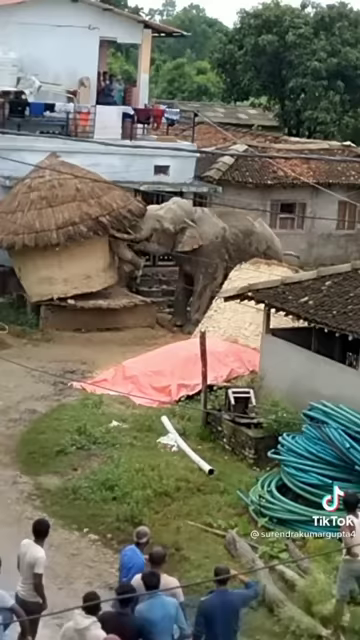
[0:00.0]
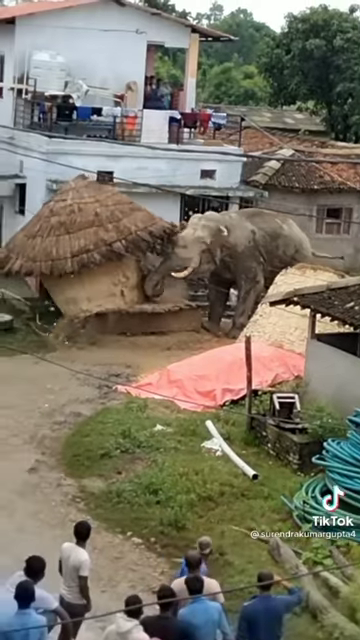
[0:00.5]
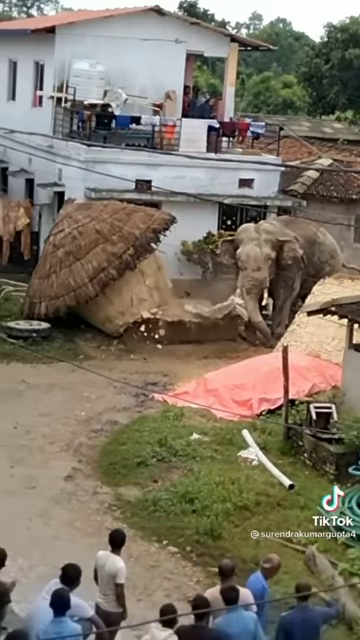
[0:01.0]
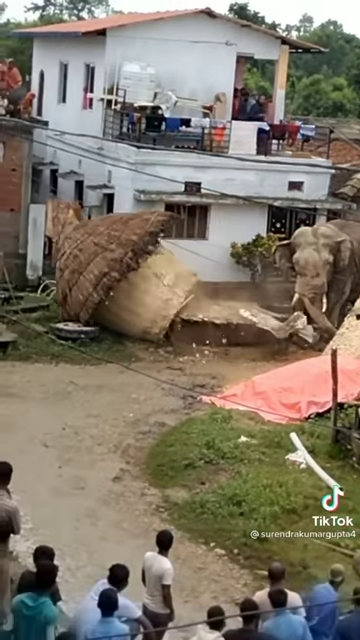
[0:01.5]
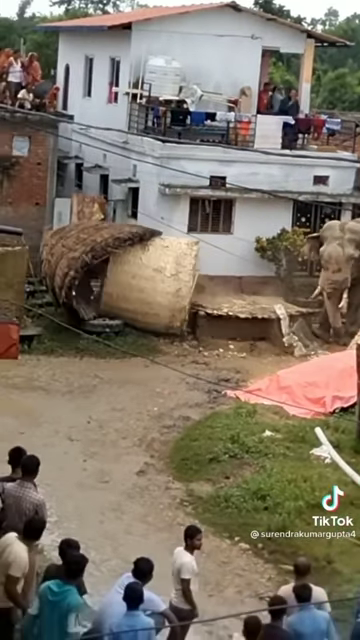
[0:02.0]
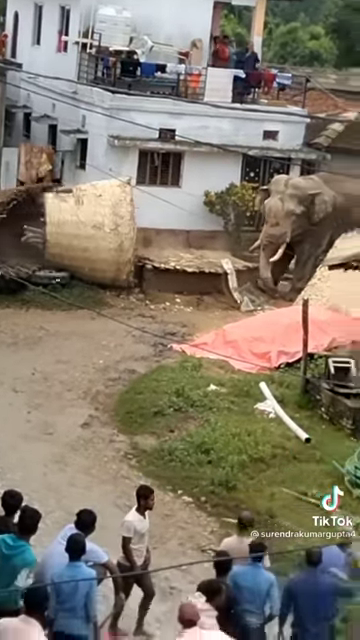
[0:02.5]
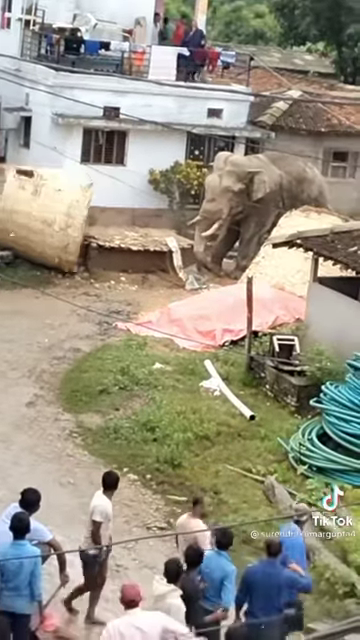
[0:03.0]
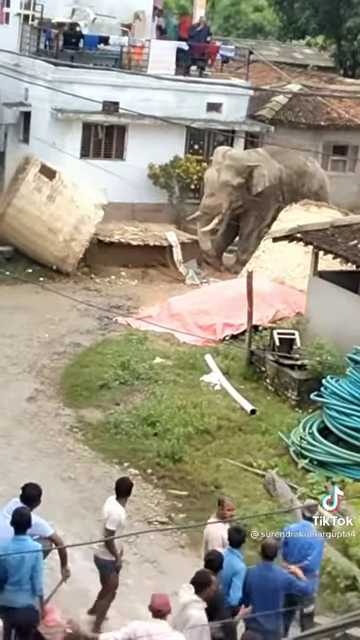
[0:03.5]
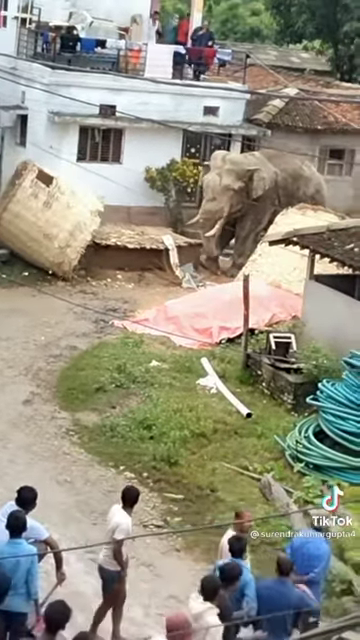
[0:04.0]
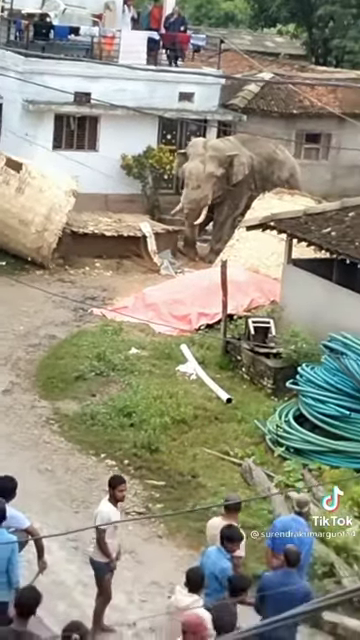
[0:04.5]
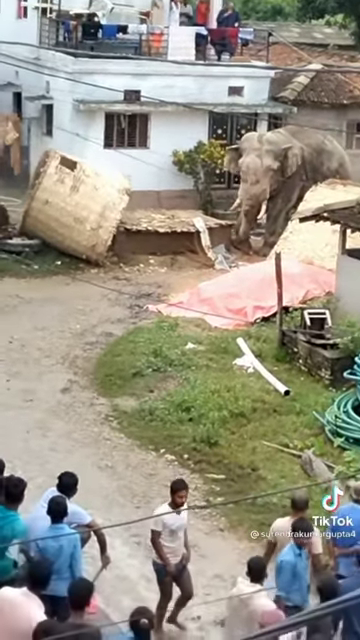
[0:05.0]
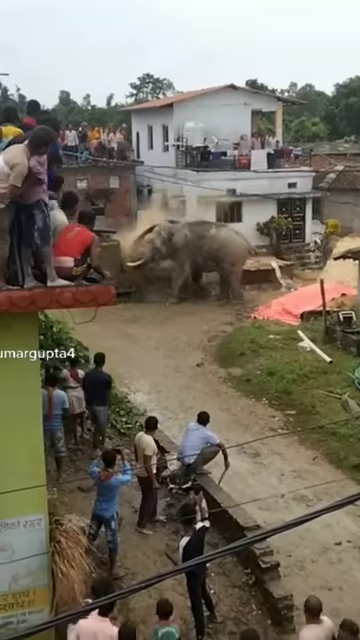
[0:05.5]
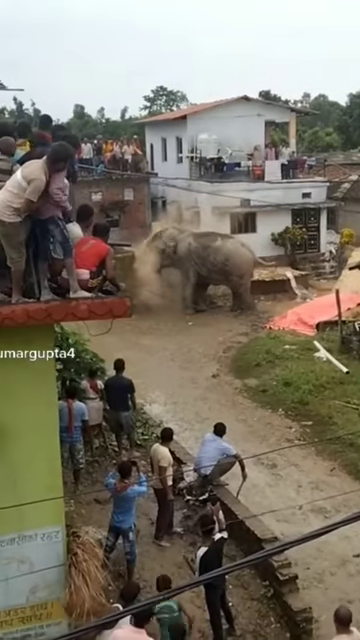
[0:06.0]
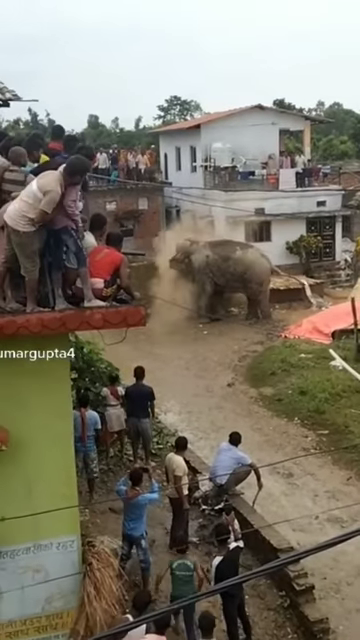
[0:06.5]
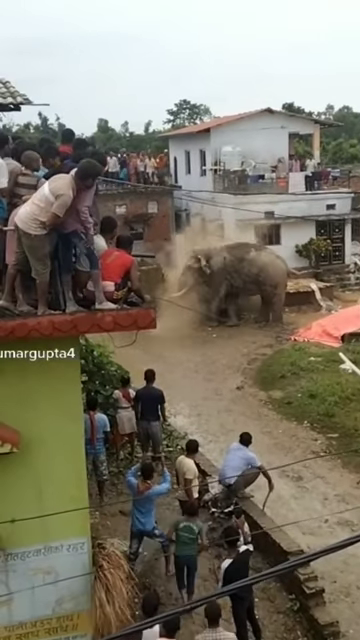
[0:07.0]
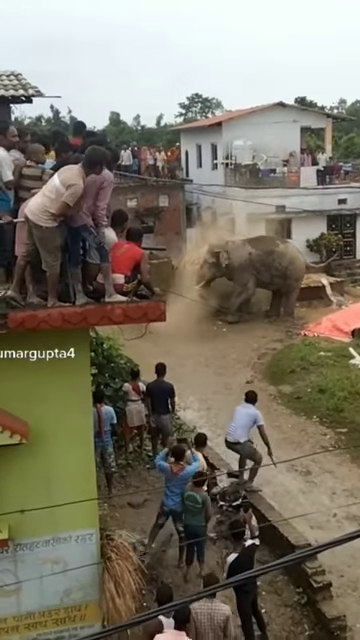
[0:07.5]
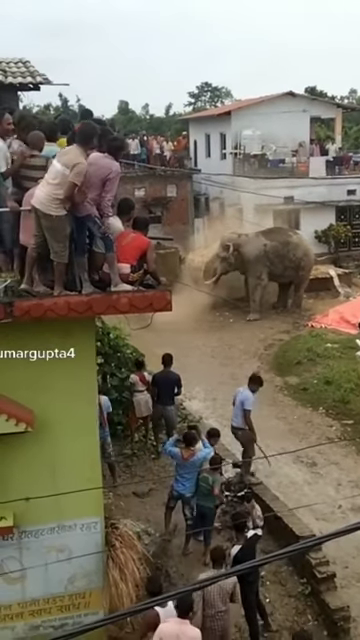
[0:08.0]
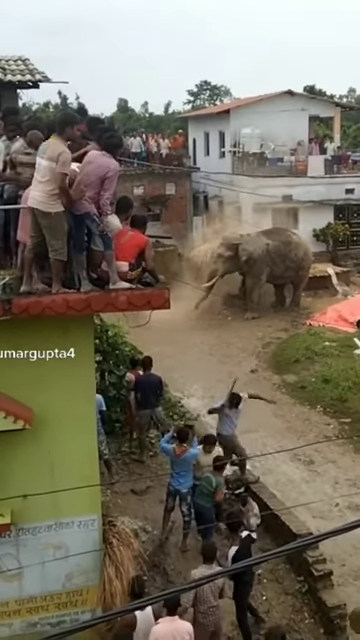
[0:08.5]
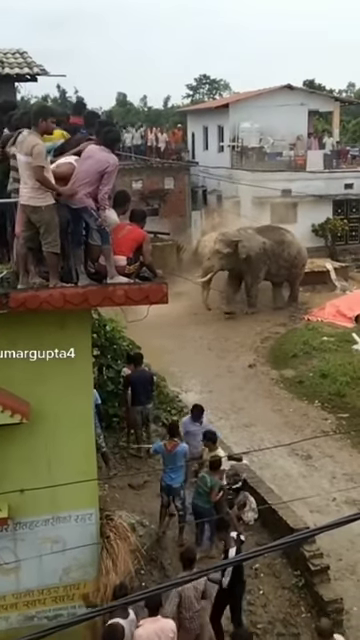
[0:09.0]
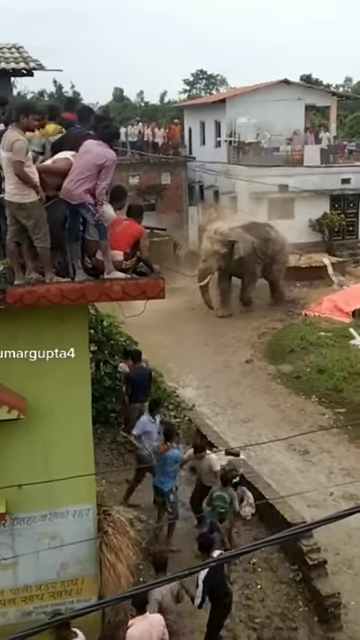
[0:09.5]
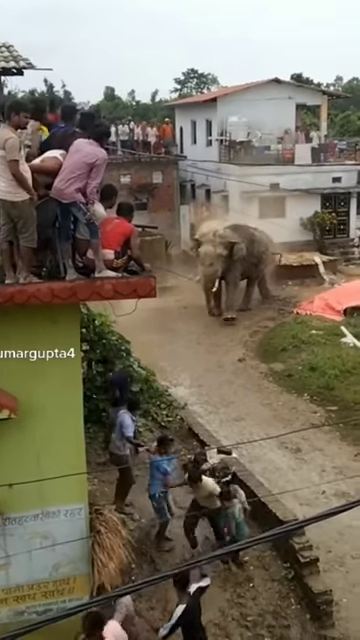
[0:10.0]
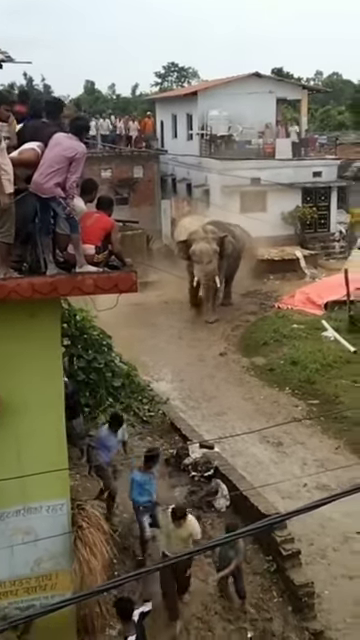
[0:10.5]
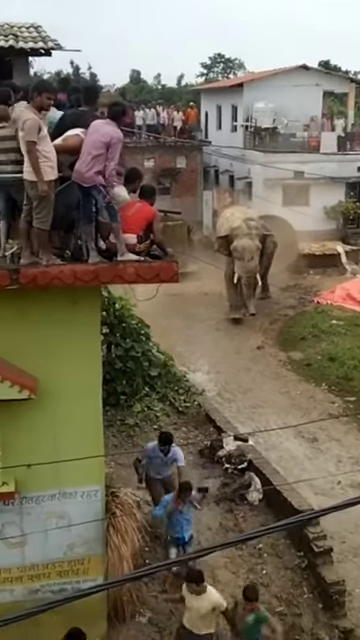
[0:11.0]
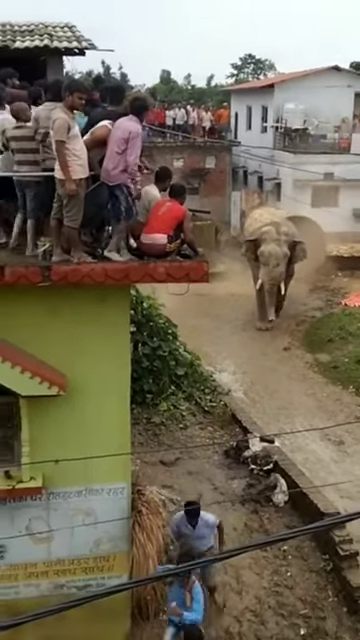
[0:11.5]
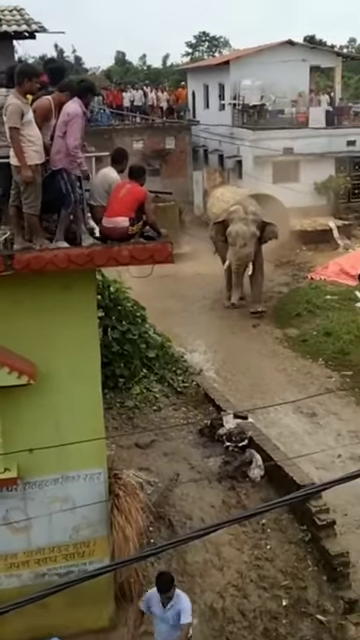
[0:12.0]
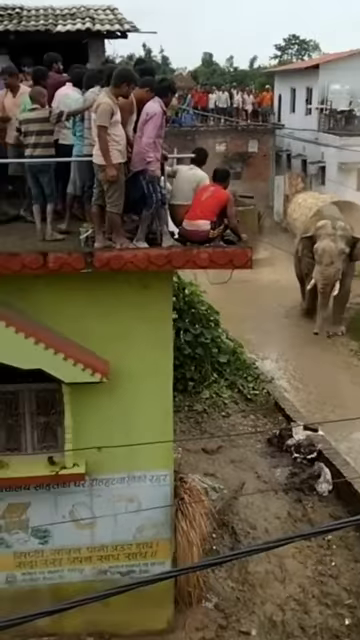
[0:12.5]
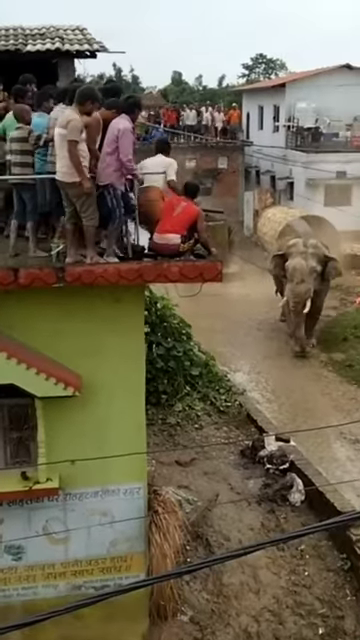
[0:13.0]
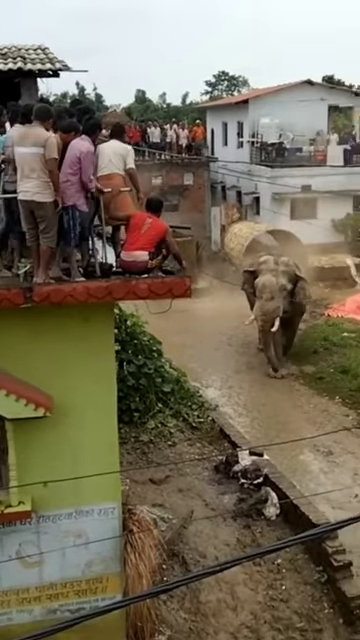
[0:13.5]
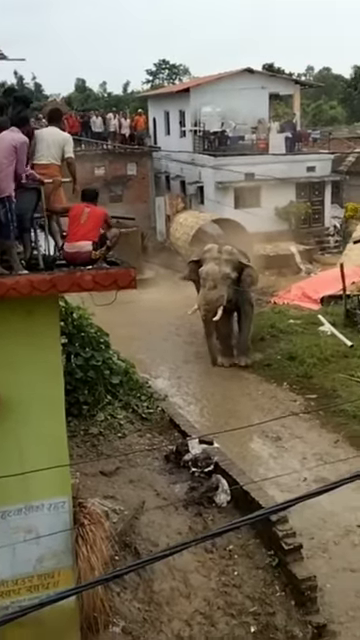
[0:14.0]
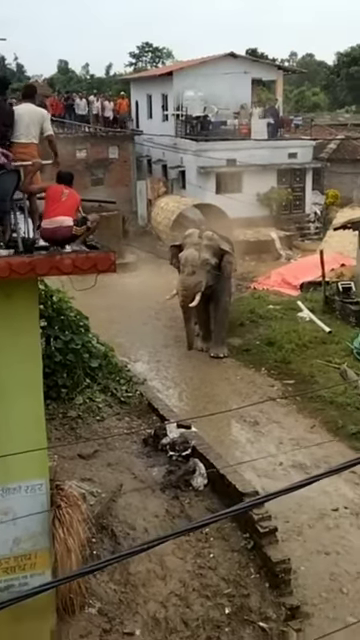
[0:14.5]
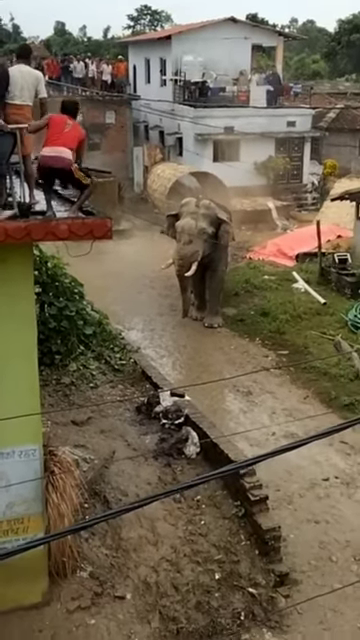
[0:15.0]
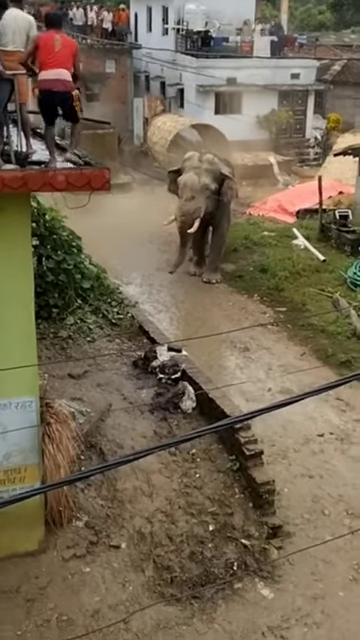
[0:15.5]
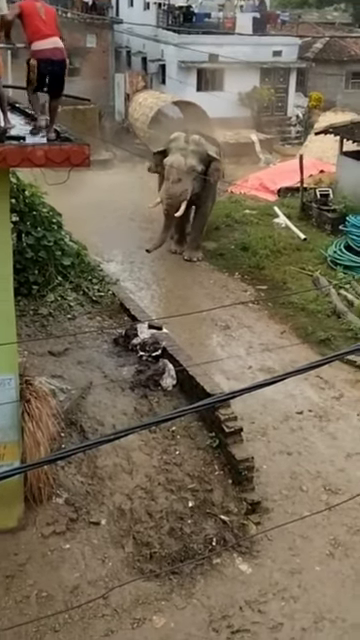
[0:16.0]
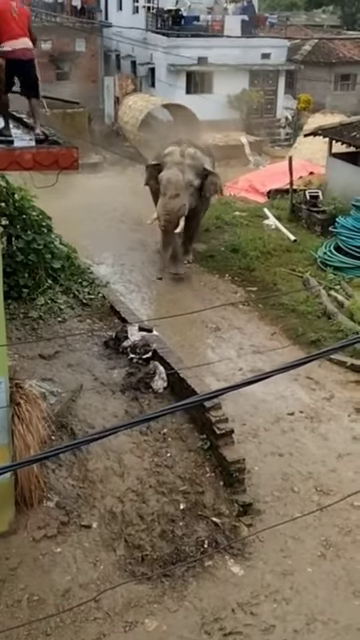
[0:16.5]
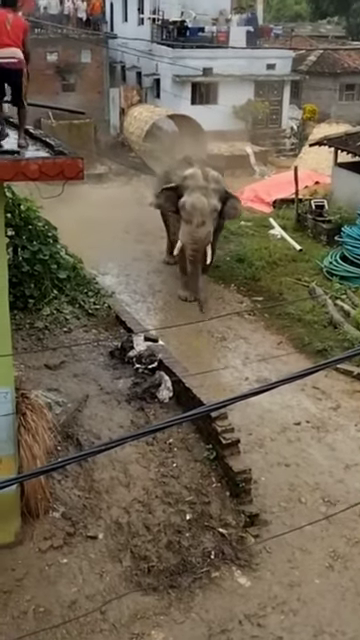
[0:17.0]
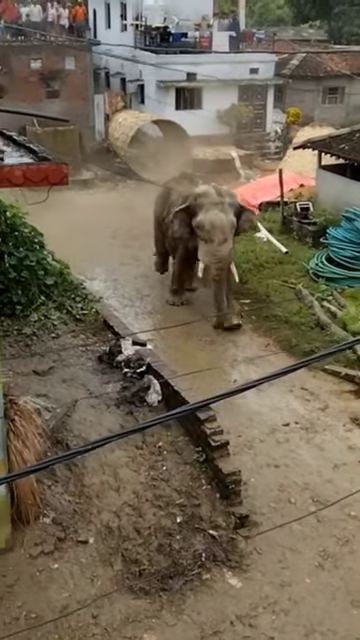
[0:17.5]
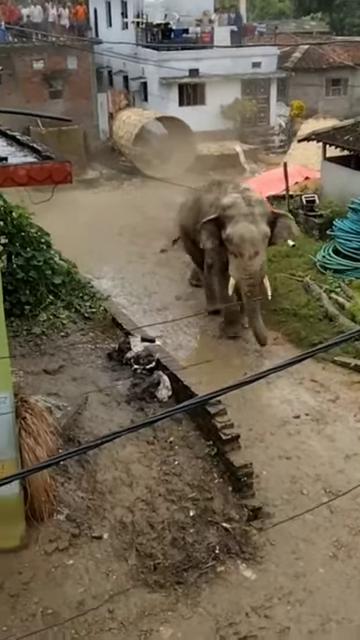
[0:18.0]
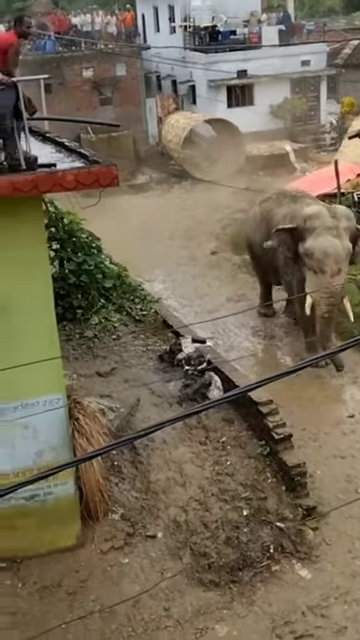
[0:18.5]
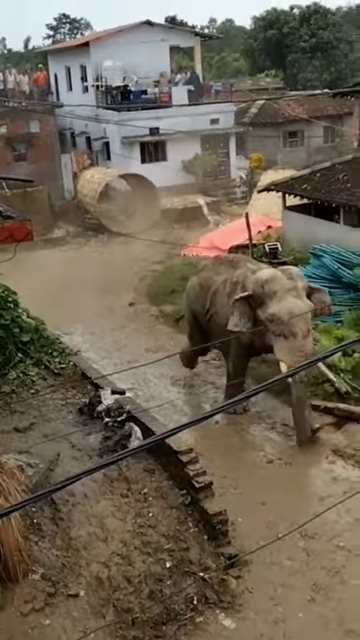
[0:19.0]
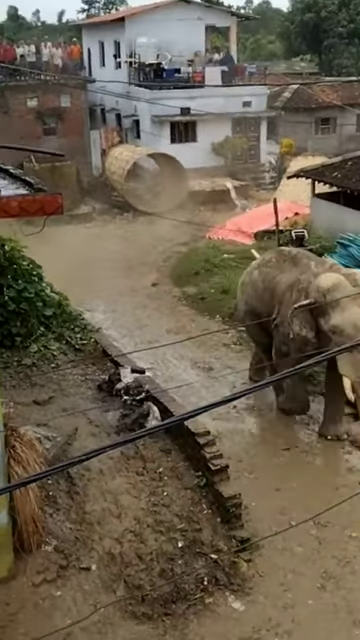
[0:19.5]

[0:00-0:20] The video is titled wild elephant attack and shows an elephant going through a very poor neighborhood. The elephant tips over a big cylindrical object, apparently a little hut of some sort, and walks down the sidewalk. It looks very wet outside. People are watching him, but as he approaches and gets closer to them, they all run. People packed on a balcony watch the elephant; they kind of back off a little as the elephant walks and looks at them for a moment, and then he continues to walk. The elephant is very big, with white tusks that come out by his trunk. People on many elevated decks and rooftops are looking at the elephant. The sidewalk is very muddy, and two of the houses are visible.